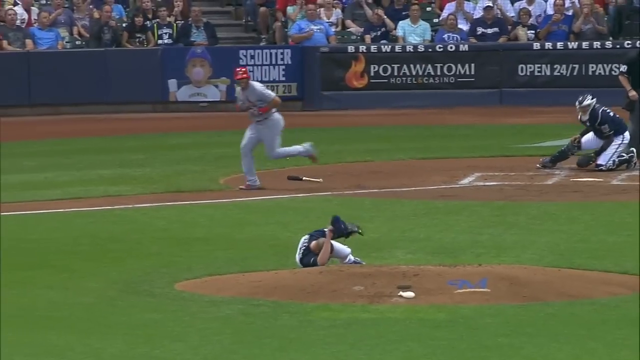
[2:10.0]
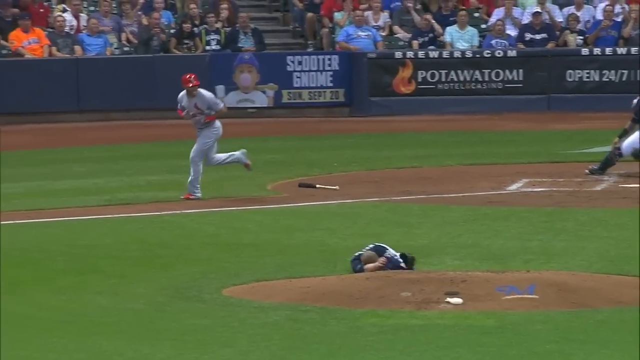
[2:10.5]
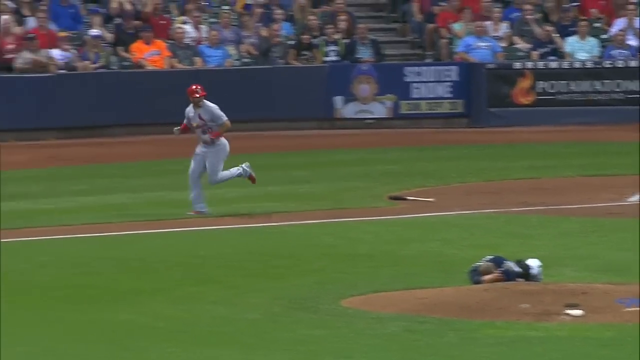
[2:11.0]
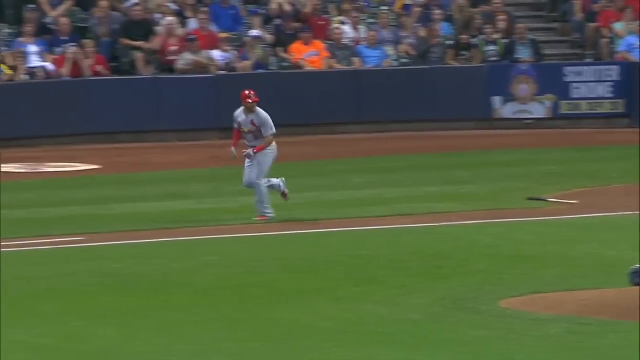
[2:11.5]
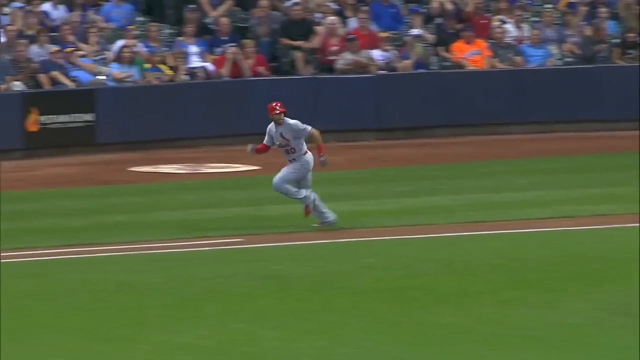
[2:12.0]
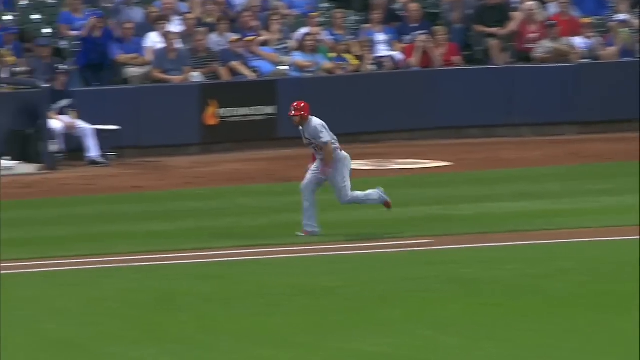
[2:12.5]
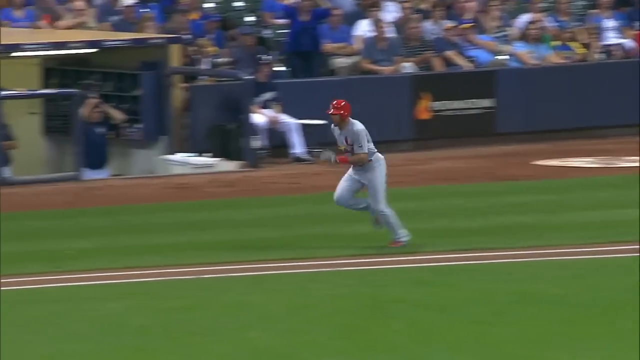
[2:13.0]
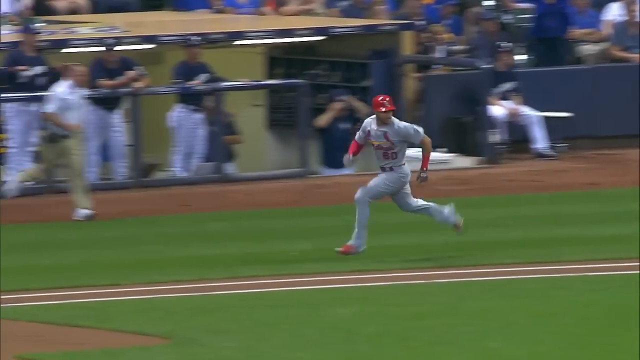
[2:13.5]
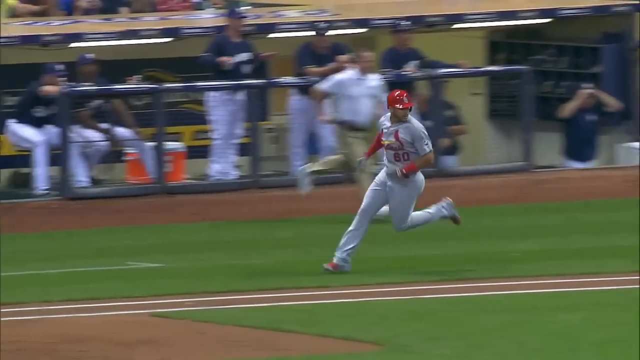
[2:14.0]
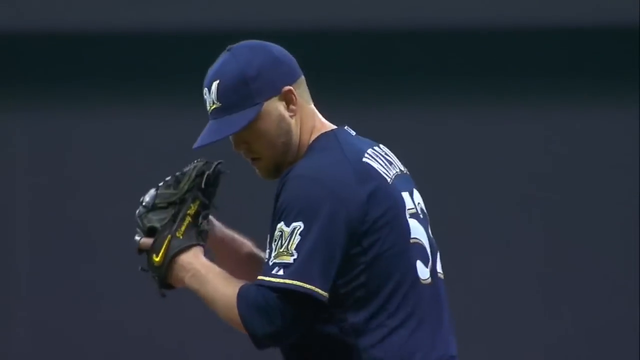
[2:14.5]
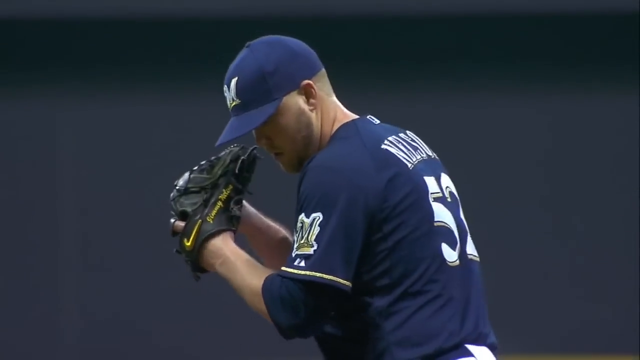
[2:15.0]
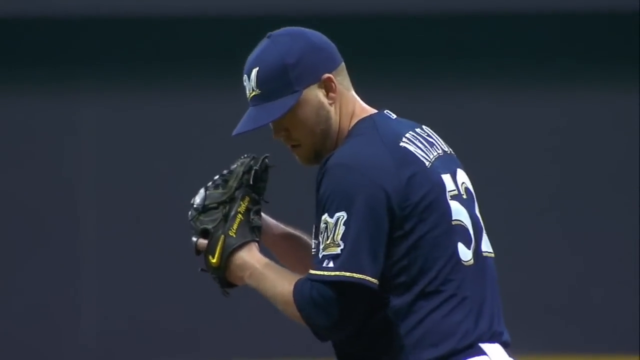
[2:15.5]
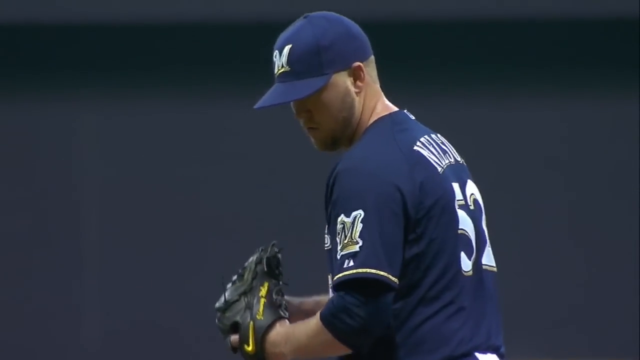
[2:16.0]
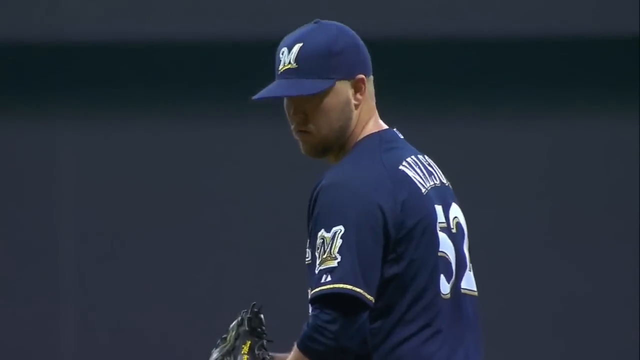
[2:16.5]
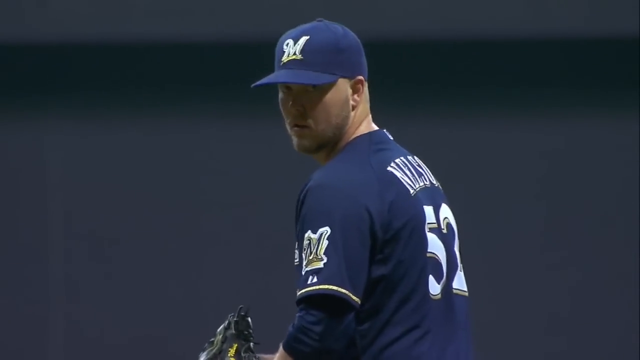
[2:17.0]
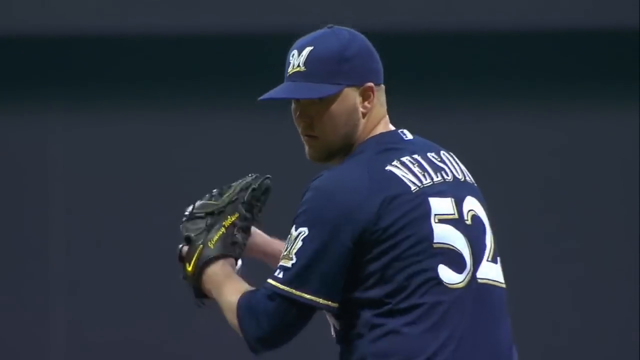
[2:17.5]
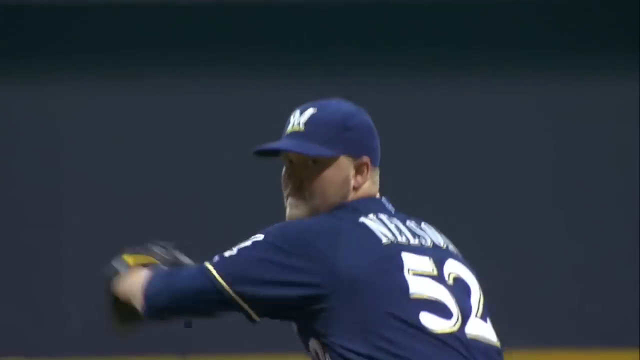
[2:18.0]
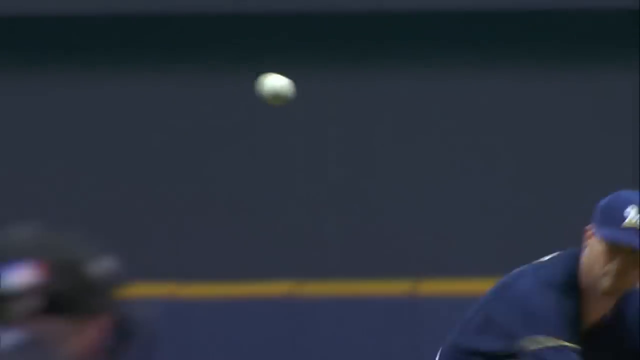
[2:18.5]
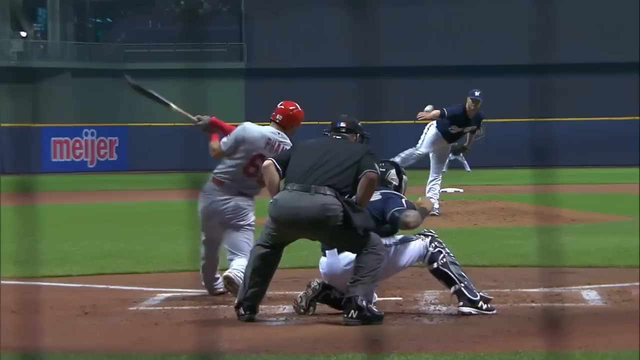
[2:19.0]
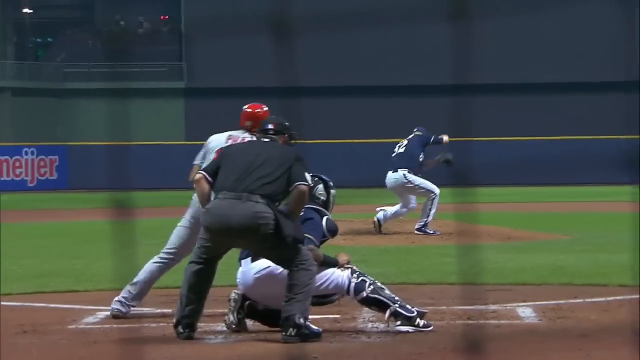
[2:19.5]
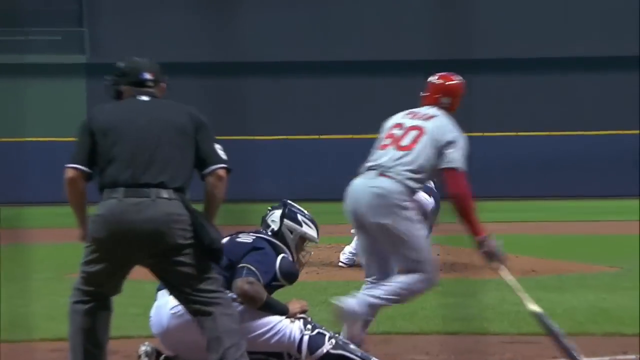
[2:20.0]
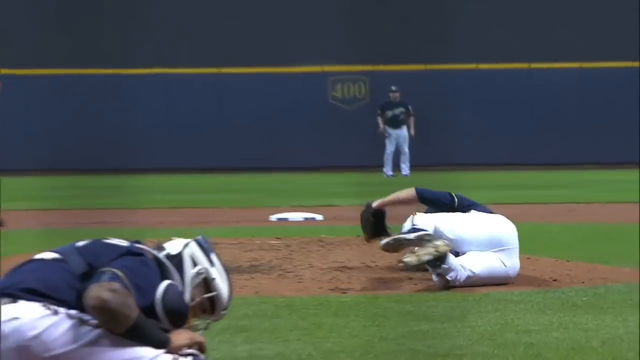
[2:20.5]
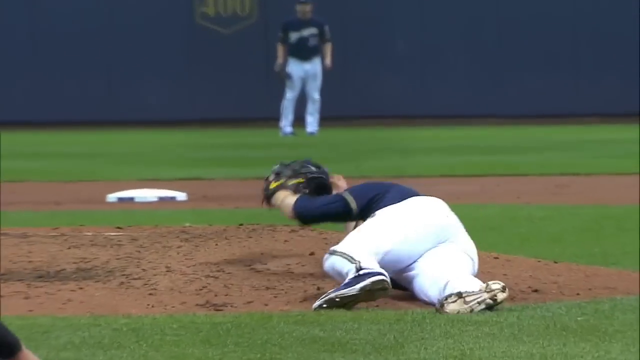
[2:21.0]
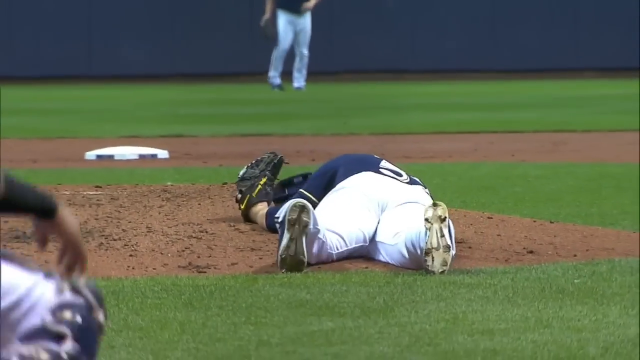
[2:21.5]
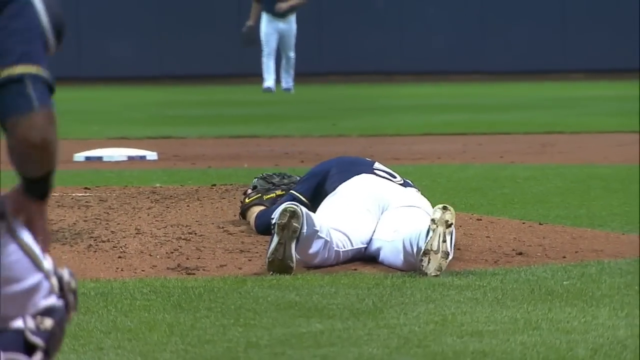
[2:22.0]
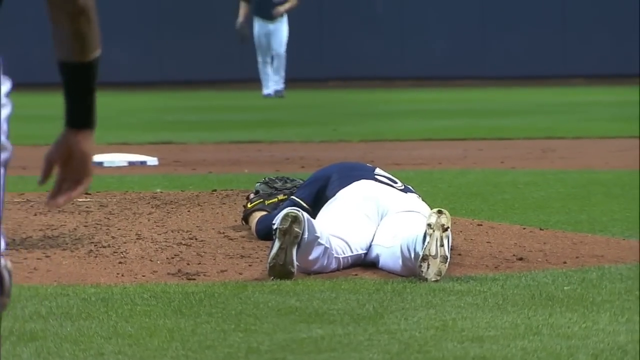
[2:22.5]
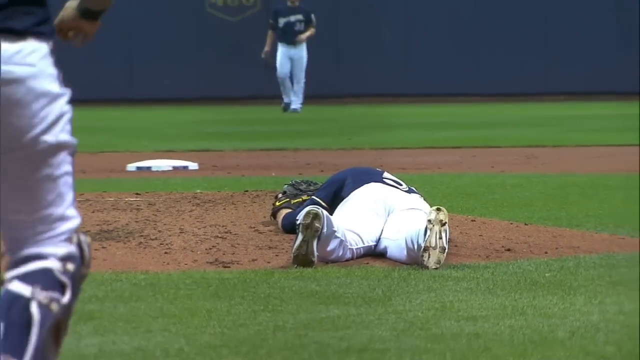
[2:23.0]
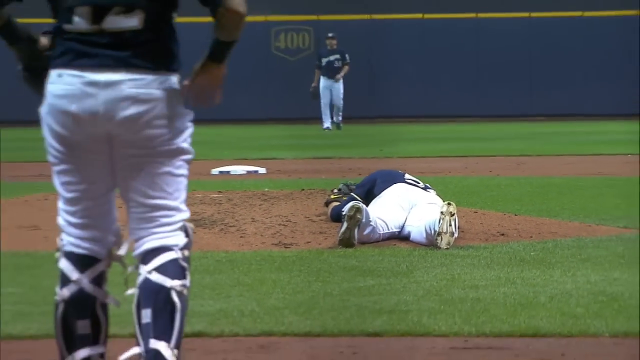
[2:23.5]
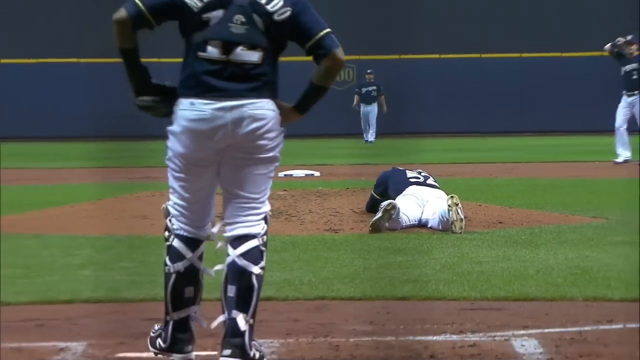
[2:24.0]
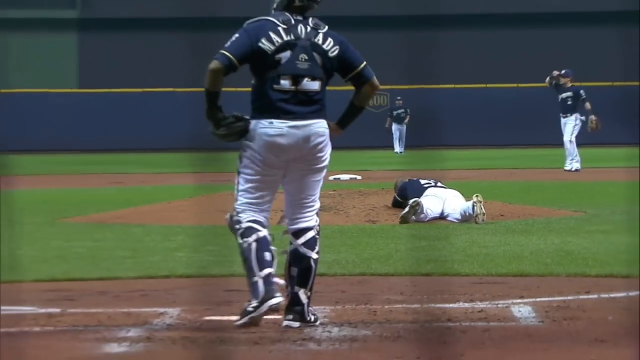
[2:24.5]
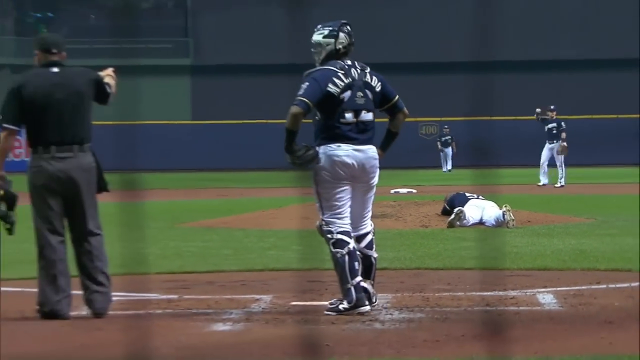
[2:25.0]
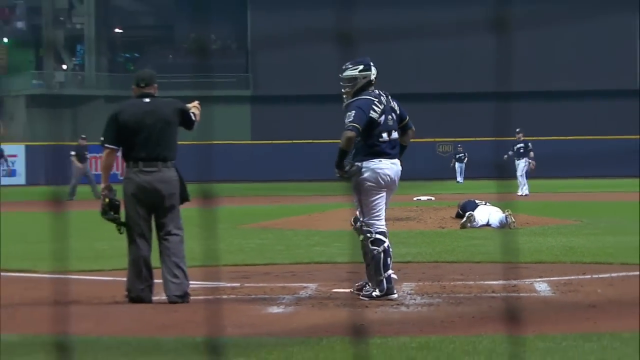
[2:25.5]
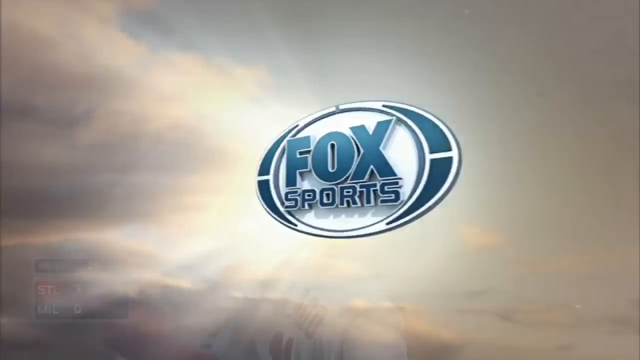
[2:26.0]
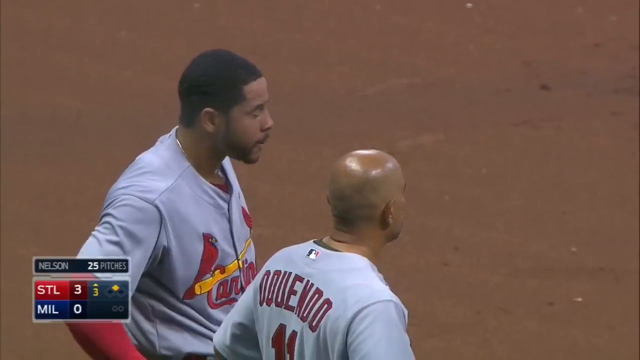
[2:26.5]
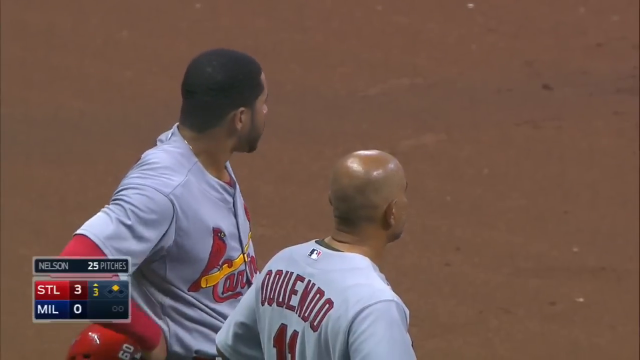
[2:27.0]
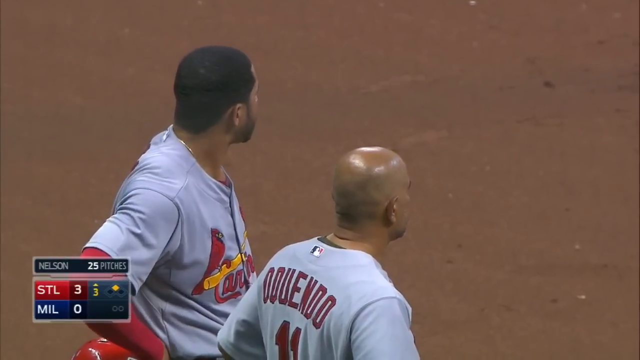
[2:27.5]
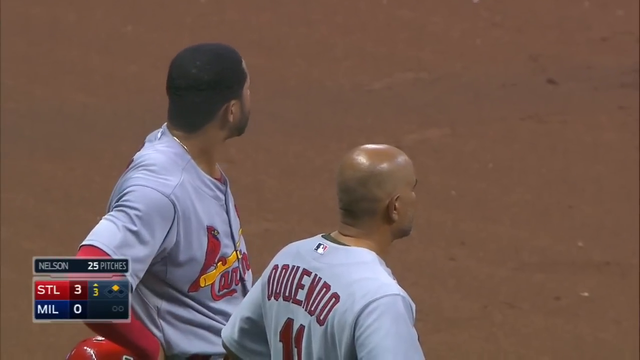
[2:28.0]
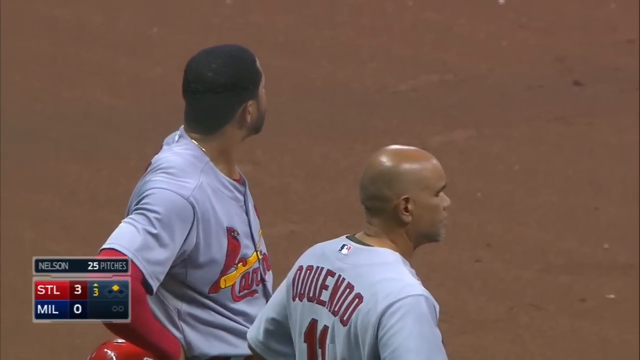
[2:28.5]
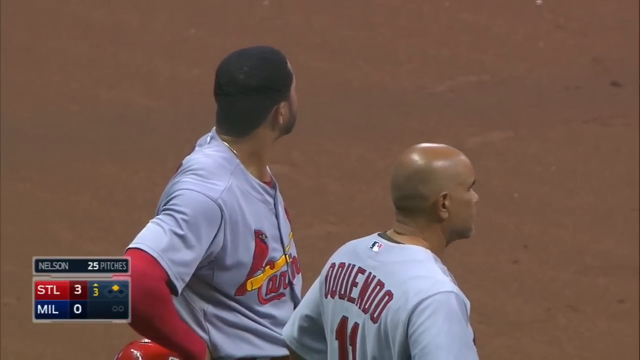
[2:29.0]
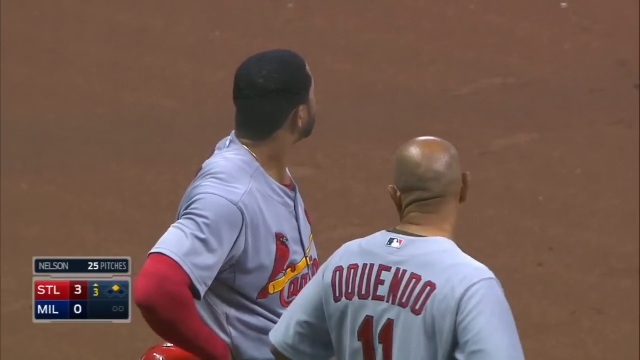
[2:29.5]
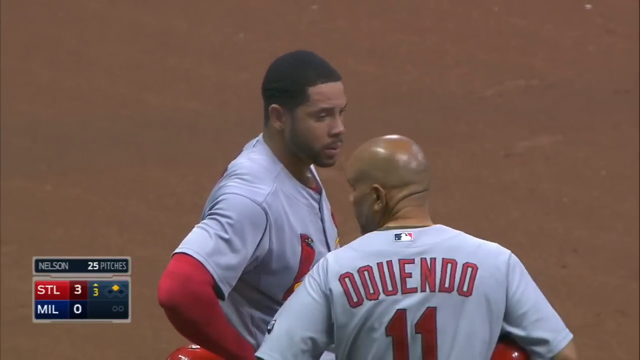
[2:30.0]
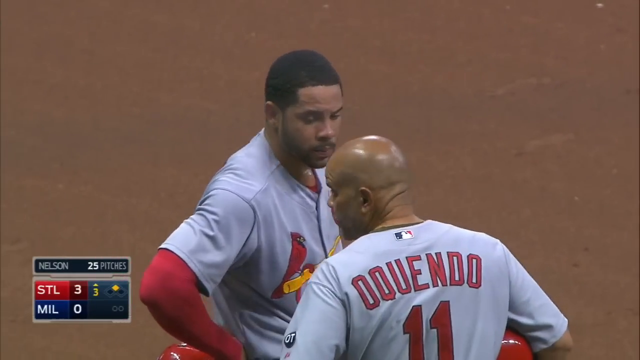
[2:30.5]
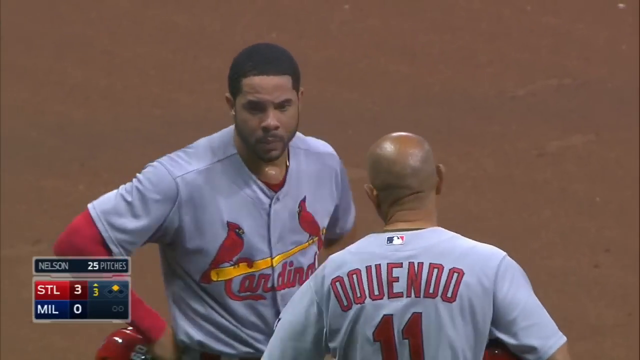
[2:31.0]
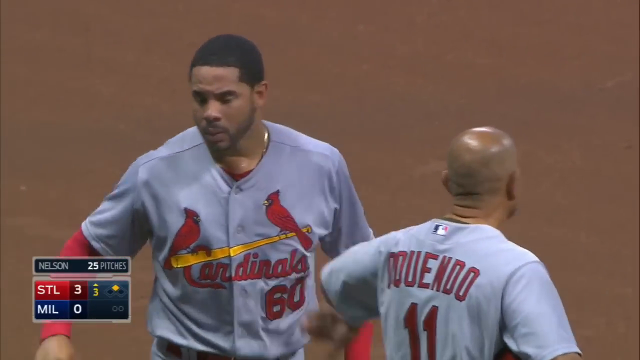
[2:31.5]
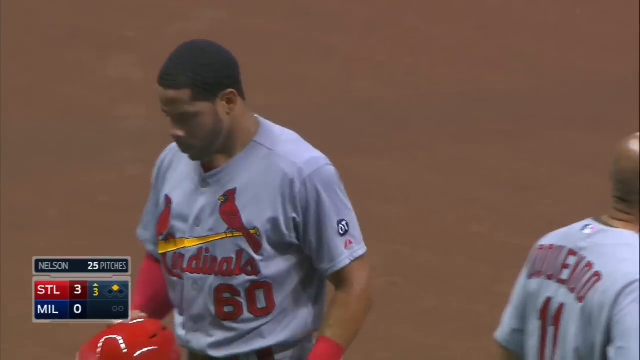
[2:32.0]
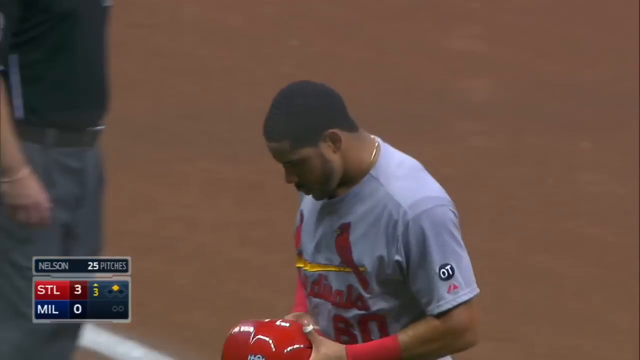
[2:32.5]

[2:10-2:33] The slow-motion replay of Nelson collapsing continues. As he falls, his right arm is crooked, so his right elbow hits the ground first, along with his right foot. His right arm grabs his head at the spot where he was hit. Pham hesitates, then runs to first base, staring at the pitcher with horror the whole way. The catcher, on his left knee with his right leg extended, rises and looks directly at the pitcher. Fans near the top of the screen are standing, apparently gasping in horror. Another replay, at natural speed, shows the ball striking Nelson's head and his quick collapse to the ground, followed by Pham standing on first base with his first base coach, looking horrified.